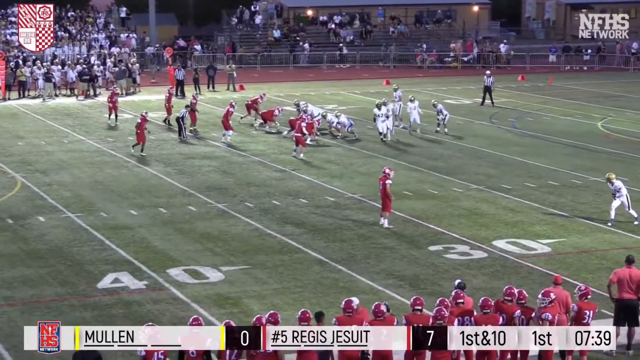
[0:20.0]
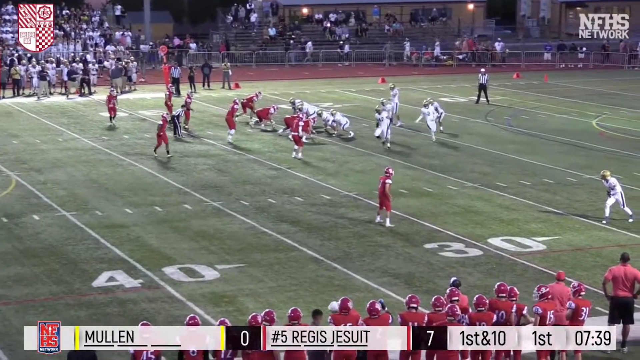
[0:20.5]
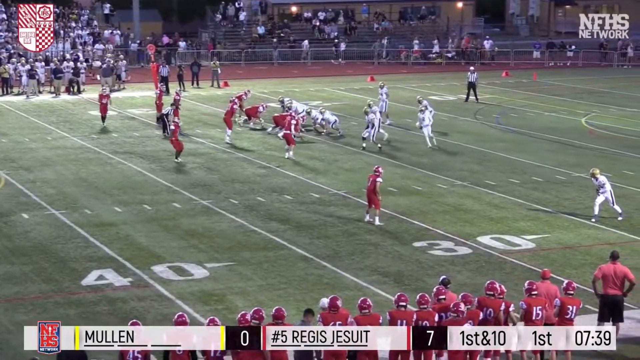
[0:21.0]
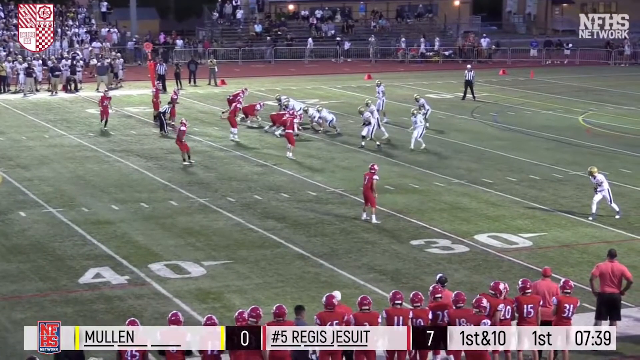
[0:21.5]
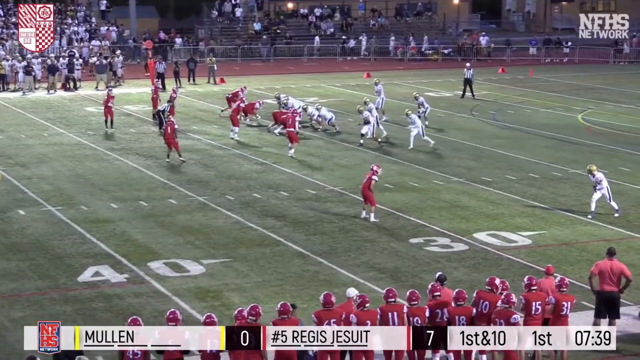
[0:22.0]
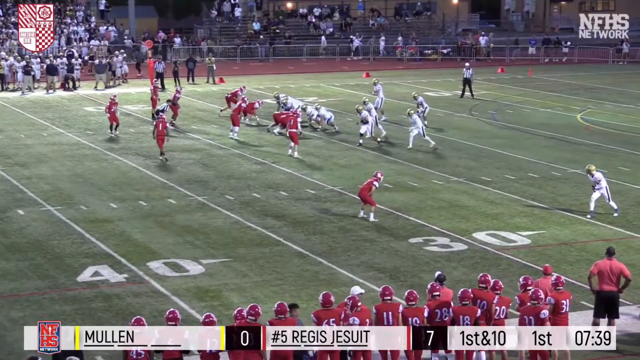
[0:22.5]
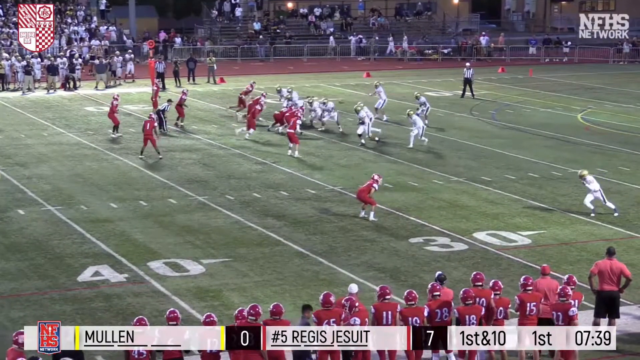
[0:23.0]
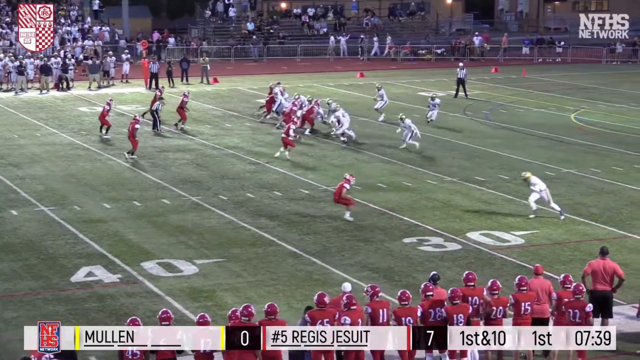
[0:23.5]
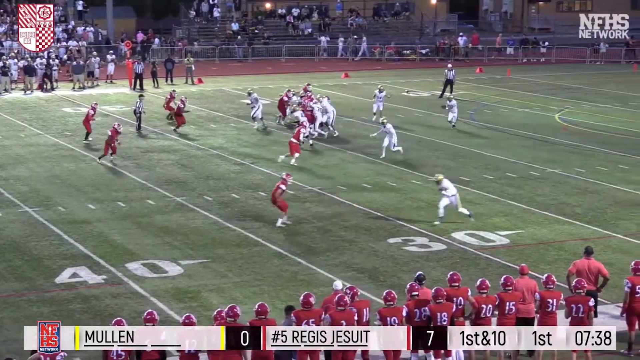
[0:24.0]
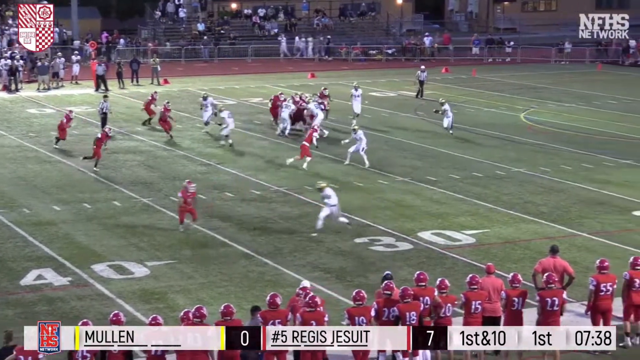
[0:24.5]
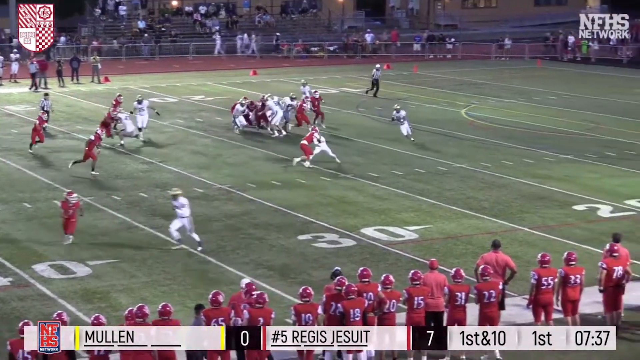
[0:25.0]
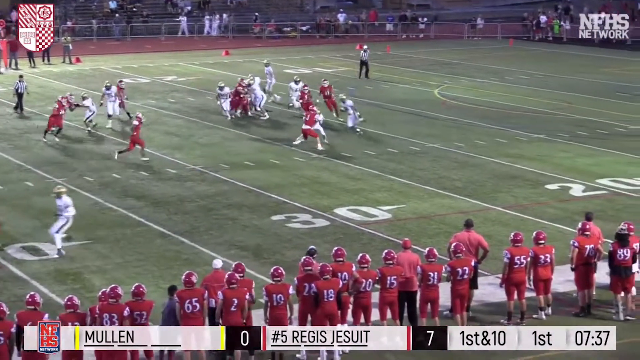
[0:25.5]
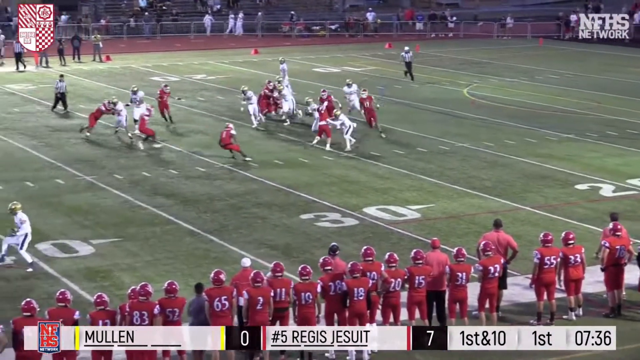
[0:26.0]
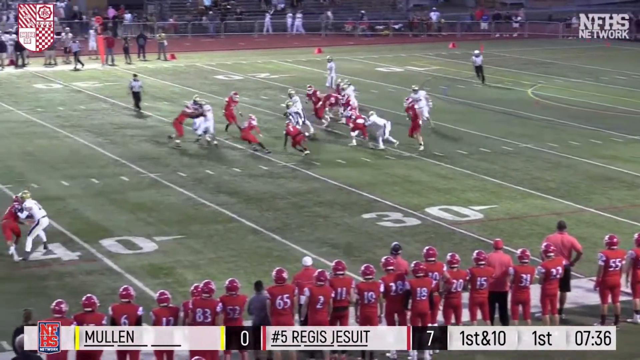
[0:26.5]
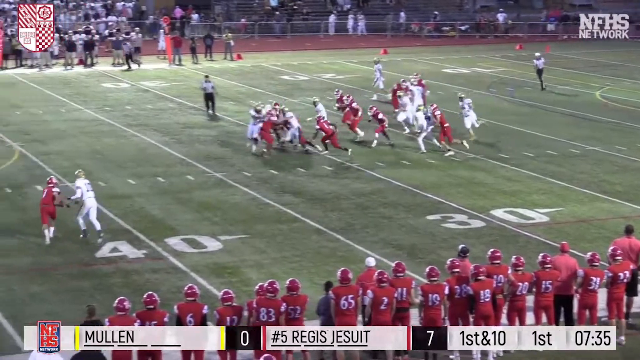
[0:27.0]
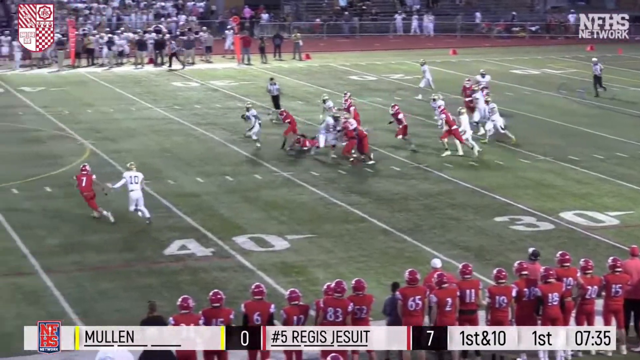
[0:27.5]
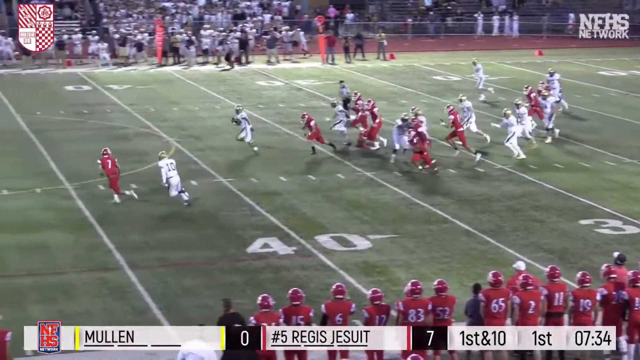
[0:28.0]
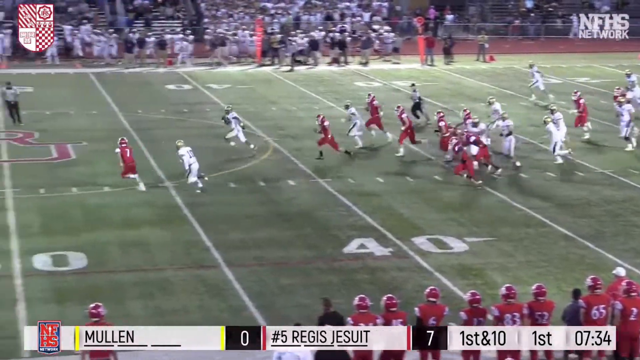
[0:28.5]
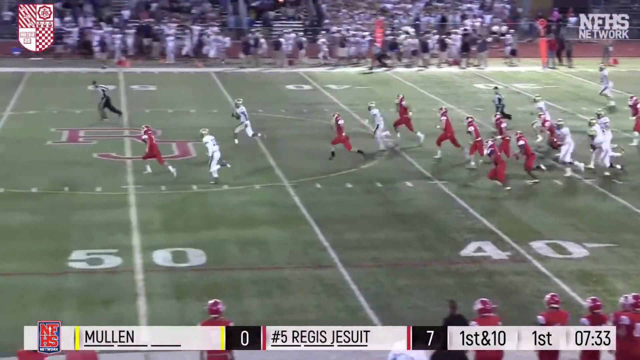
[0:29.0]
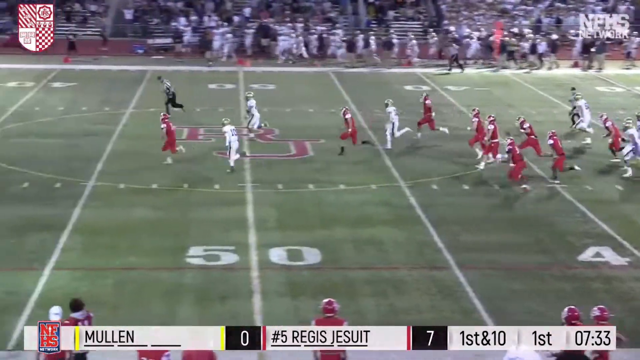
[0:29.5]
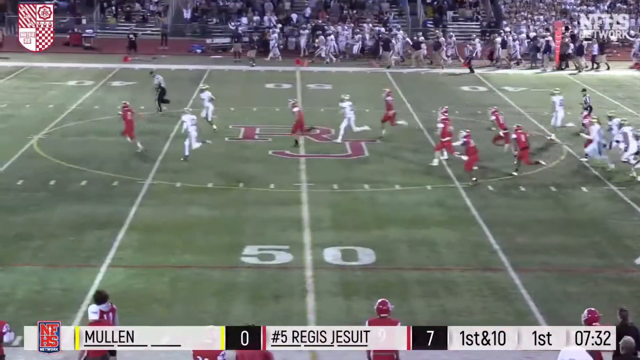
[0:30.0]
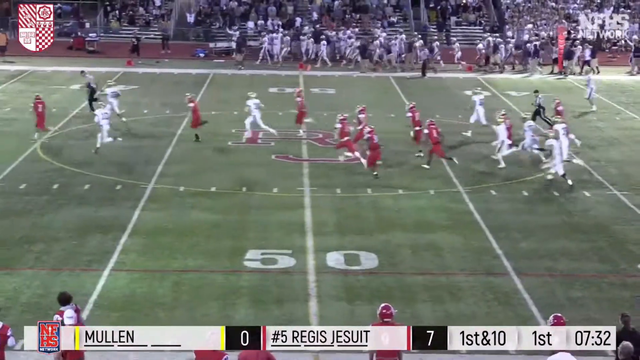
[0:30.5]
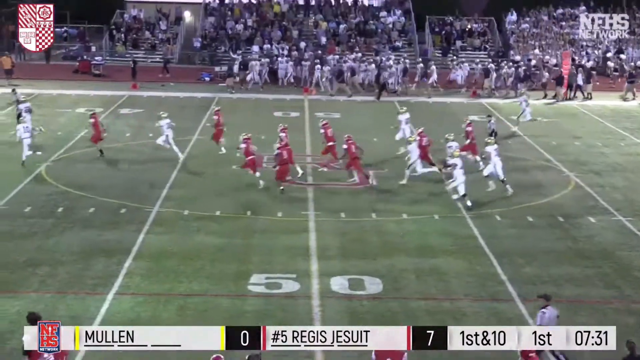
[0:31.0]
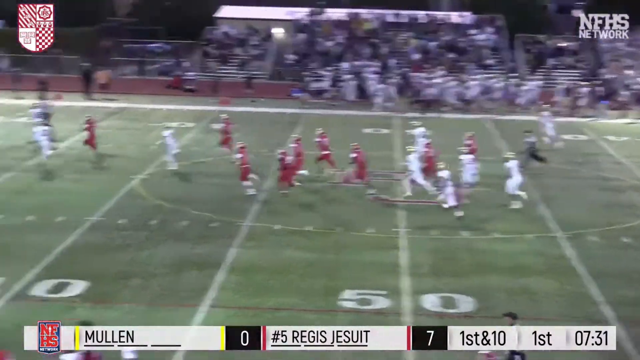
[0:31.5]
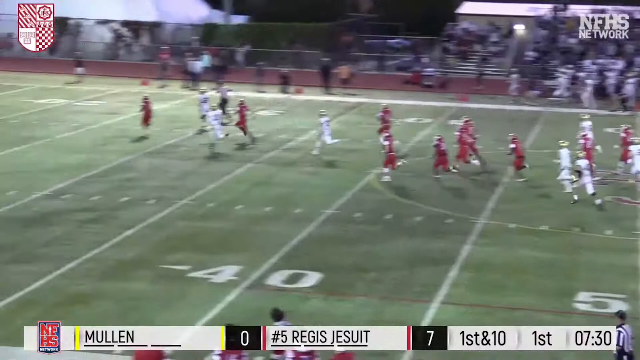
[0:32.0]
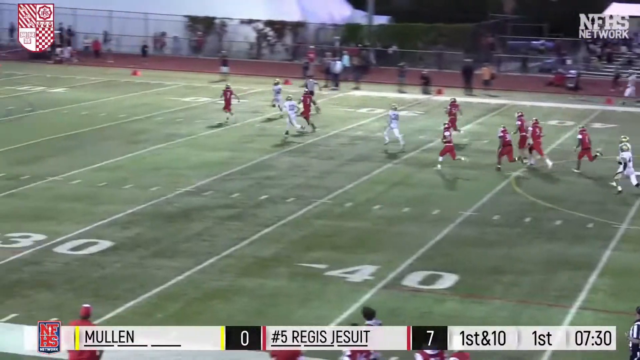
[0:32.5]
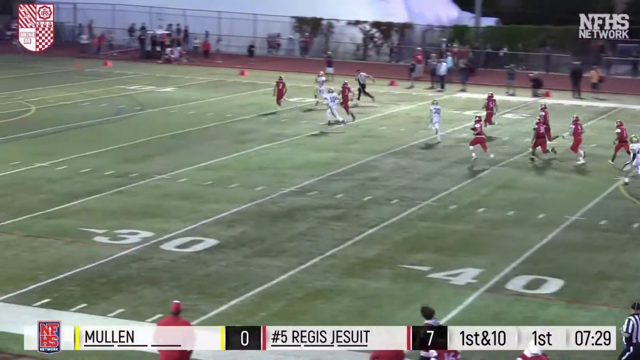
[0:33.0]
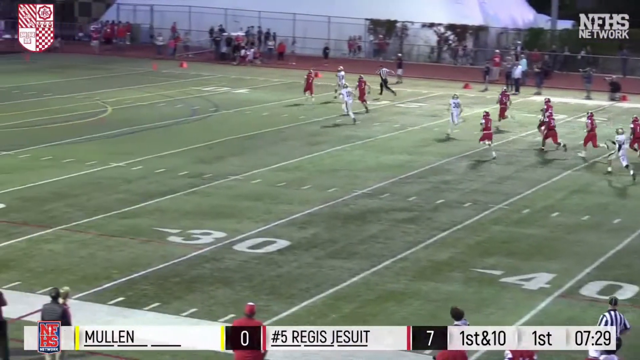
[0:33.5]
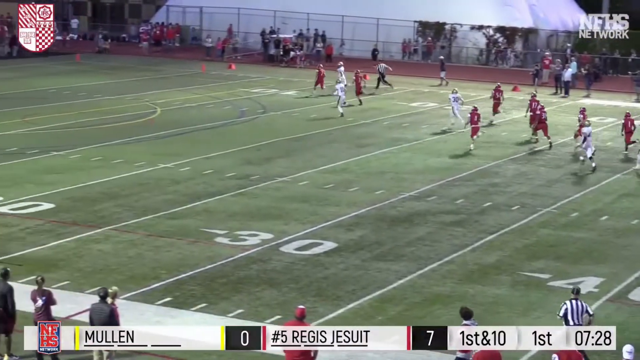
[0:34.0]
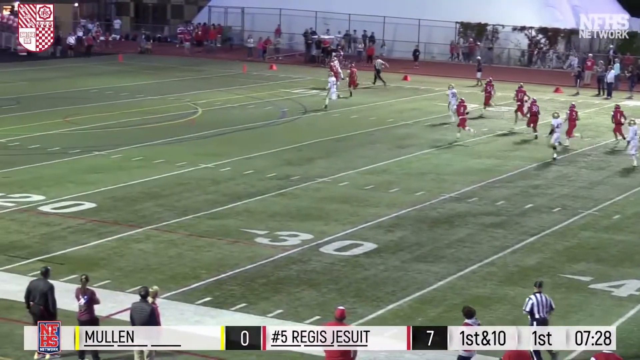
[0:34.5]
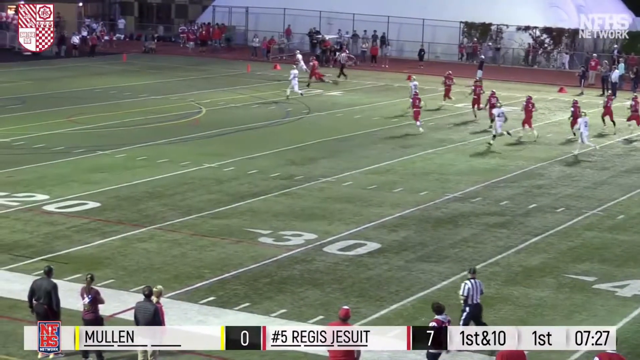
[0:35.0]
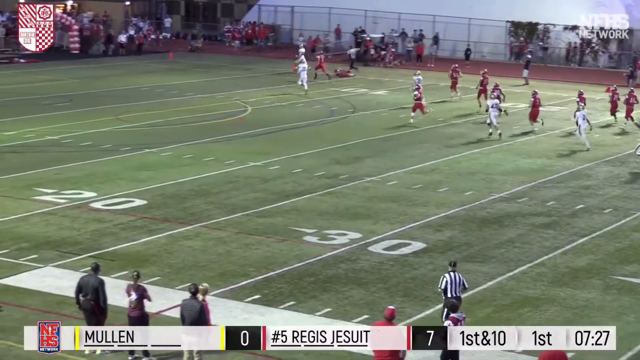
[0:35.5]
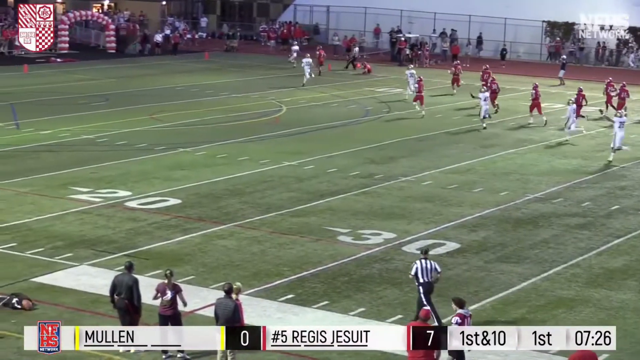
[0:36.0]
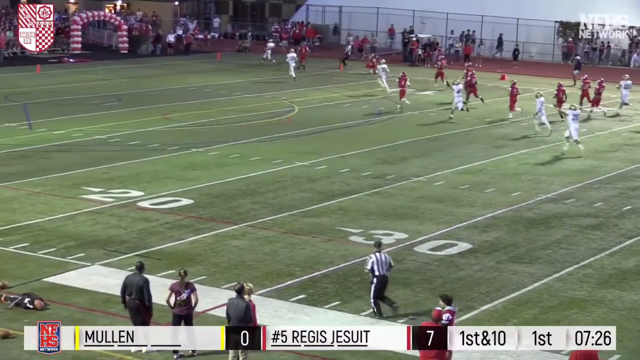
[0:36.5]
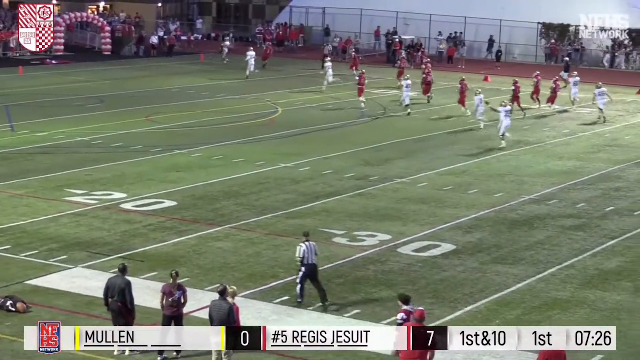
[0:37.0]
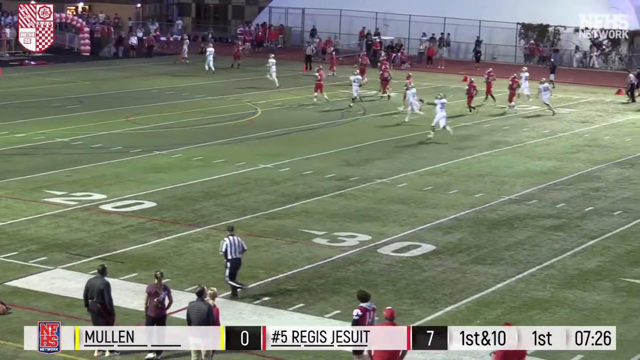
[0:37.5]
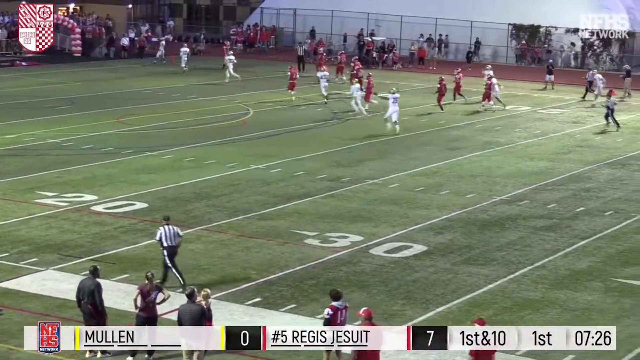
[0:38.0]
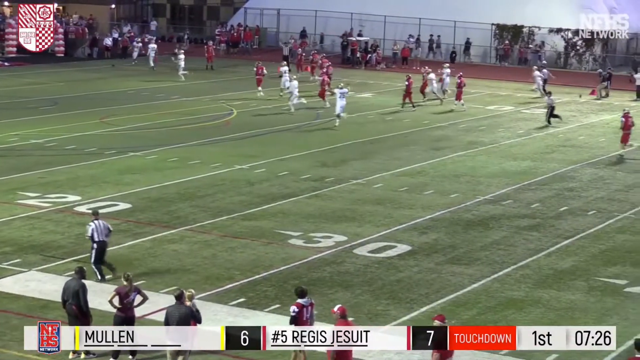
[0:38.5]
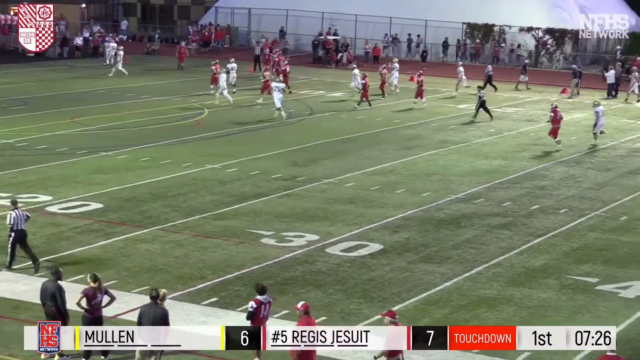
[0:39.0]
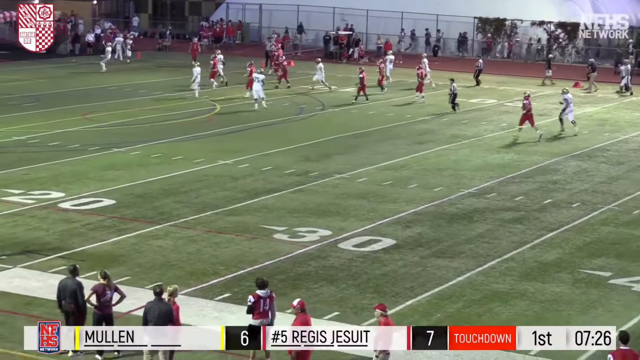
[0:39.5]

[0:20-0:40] At the bottom of the screen, a score display shows Mullen with 0 and number 5 REGIS Jesuit with 7, first and 10 in the first quarter, with 7:30 left. The white team on offense goes in motion. The center hikes the ball to the white-jersey quarterback, who tosses it with his left arm to the running back moving to his right. The running back catches it, turns upfield, runs through a very narrow hole, and heads toward the right-hand side of the field. The camera initially follows him, then hovers around the middle of the field, showing players from both teams running after him. A defender in a red jersey tries to track him down, but not before he crosses the 20-yard line.